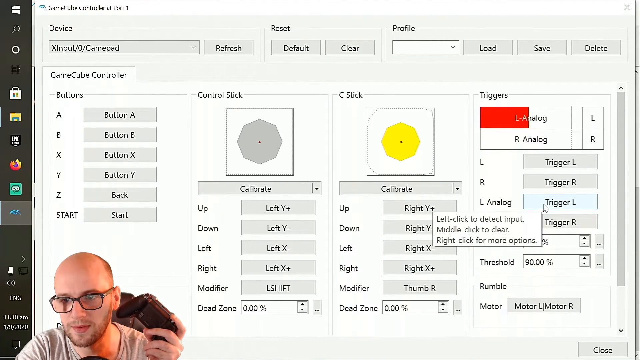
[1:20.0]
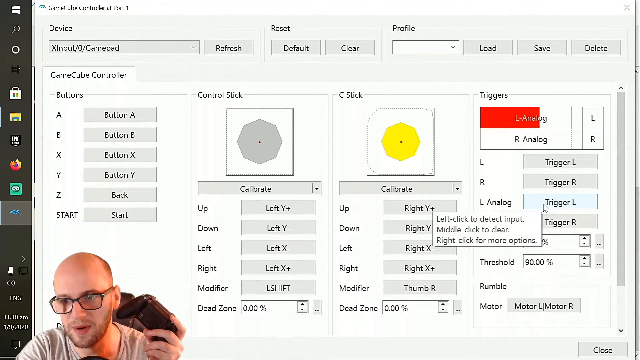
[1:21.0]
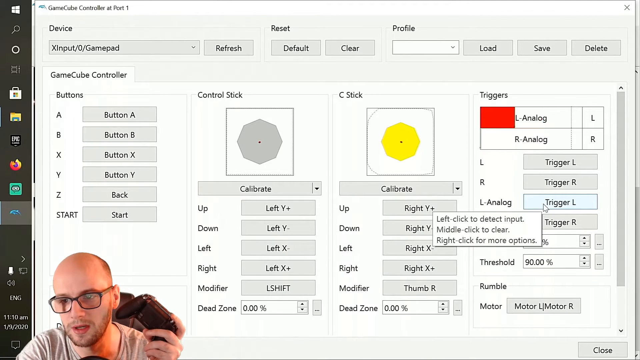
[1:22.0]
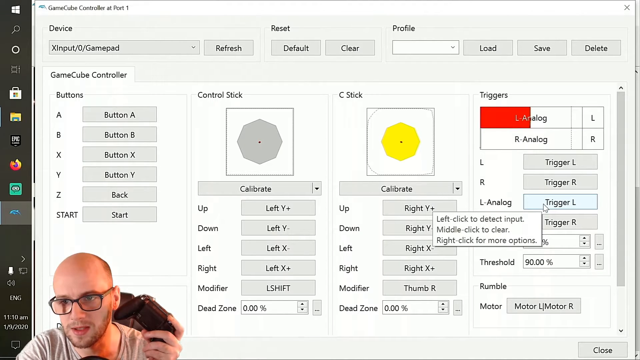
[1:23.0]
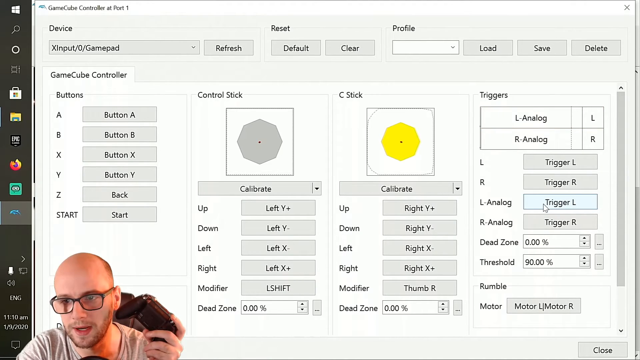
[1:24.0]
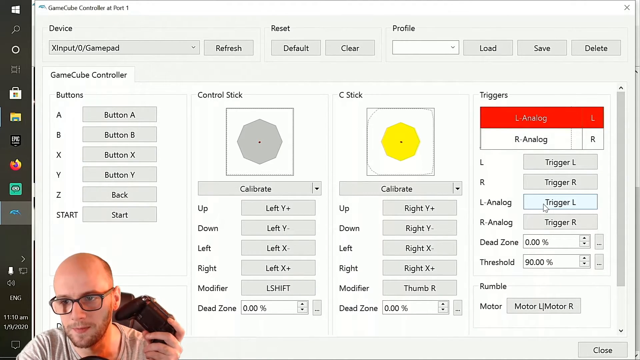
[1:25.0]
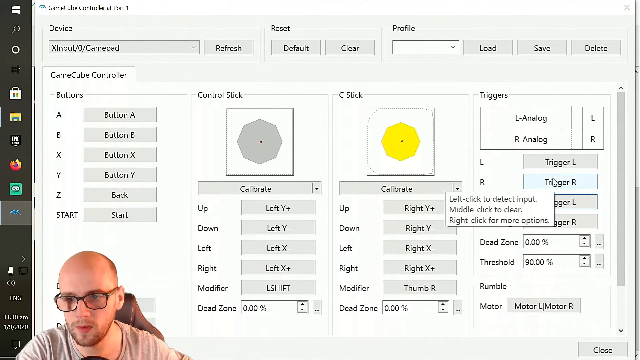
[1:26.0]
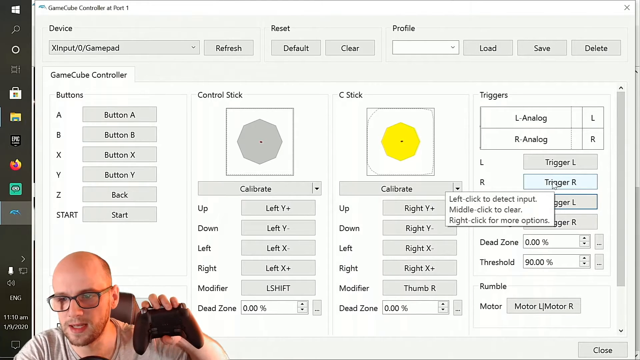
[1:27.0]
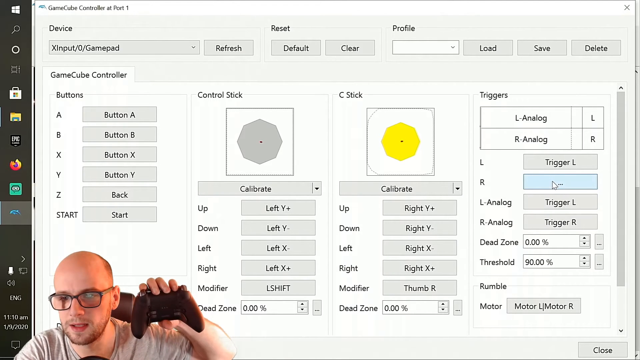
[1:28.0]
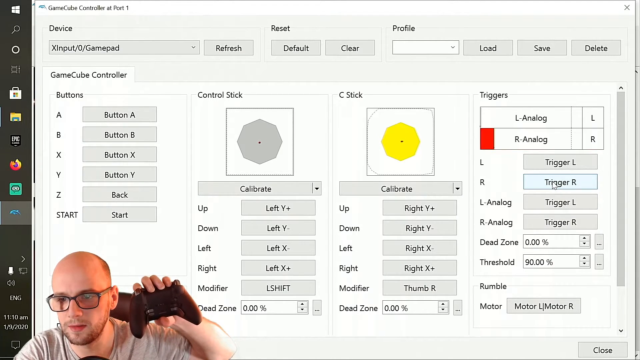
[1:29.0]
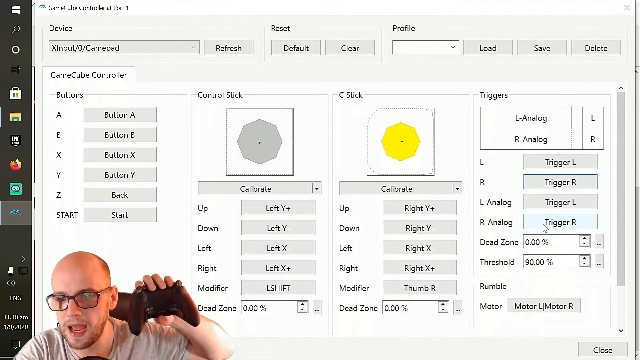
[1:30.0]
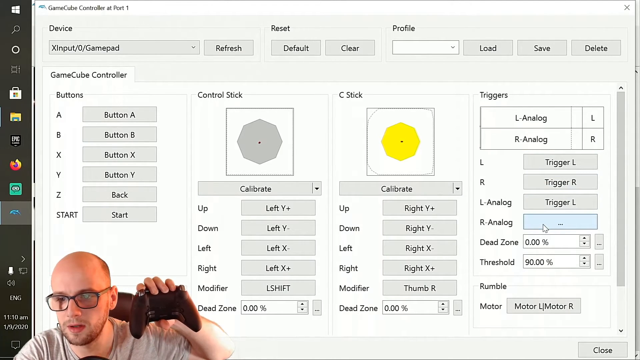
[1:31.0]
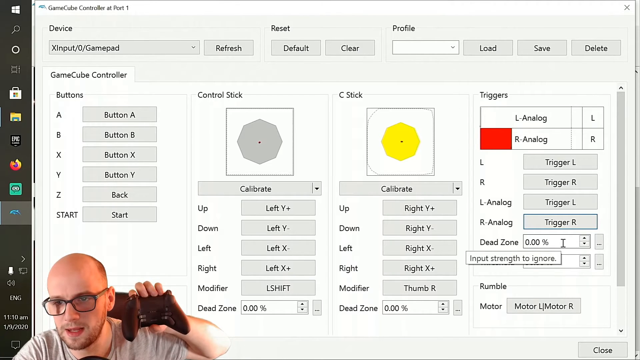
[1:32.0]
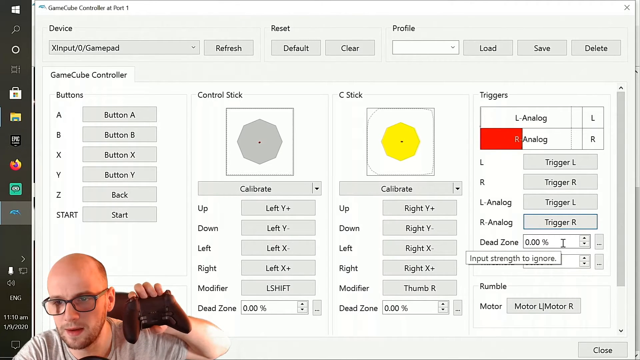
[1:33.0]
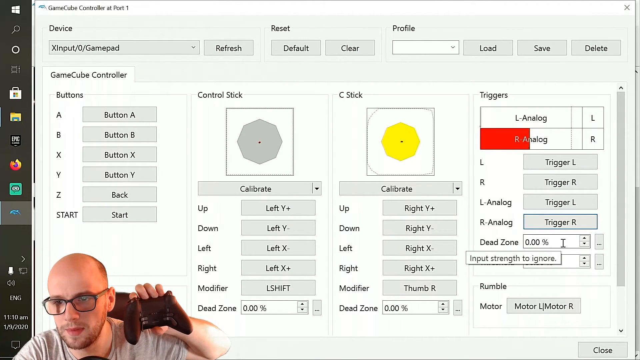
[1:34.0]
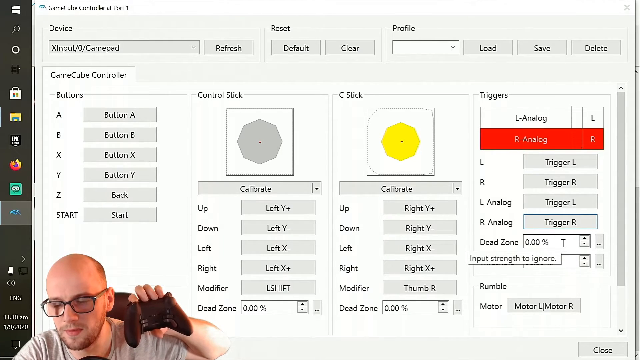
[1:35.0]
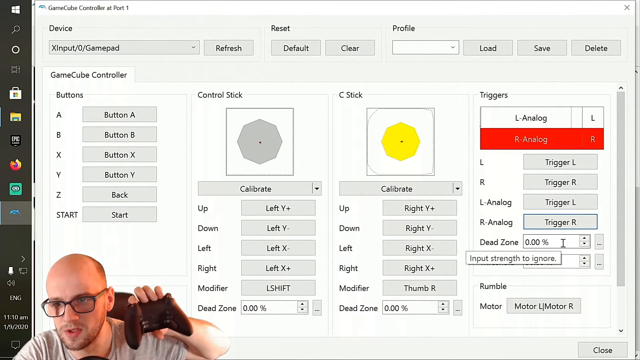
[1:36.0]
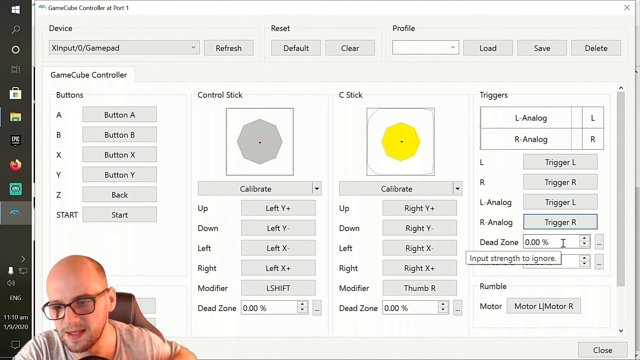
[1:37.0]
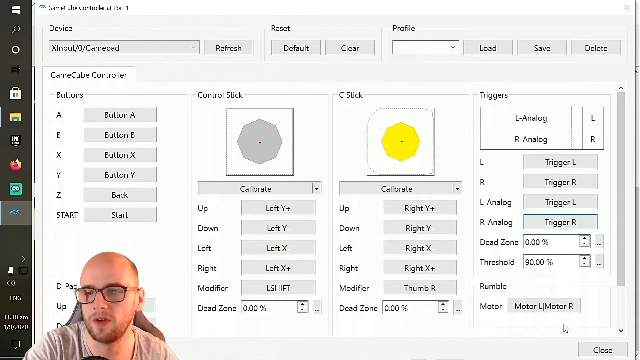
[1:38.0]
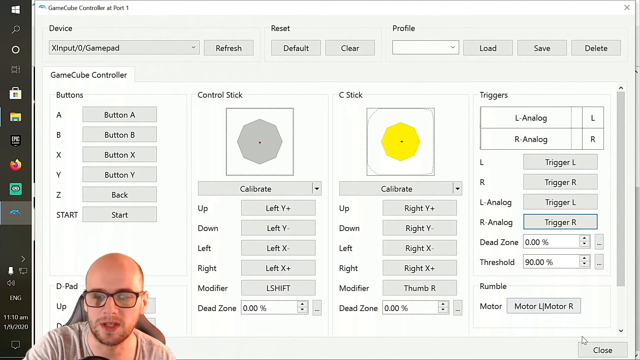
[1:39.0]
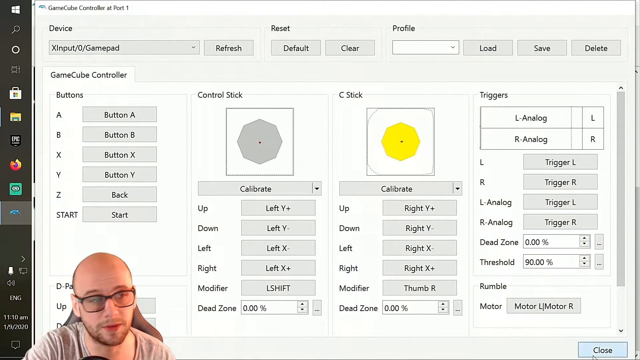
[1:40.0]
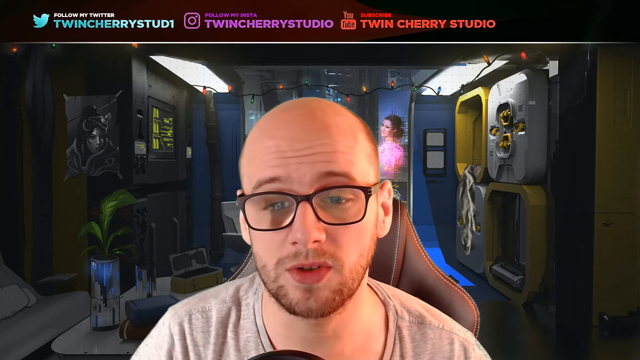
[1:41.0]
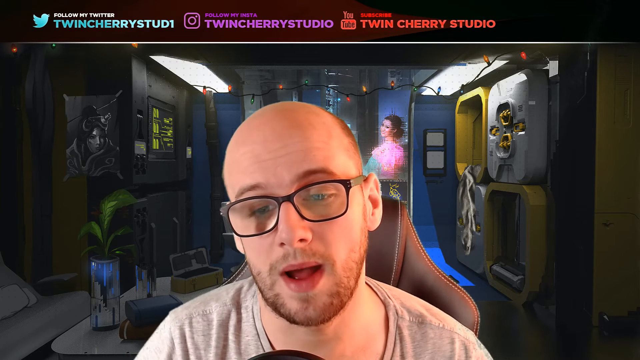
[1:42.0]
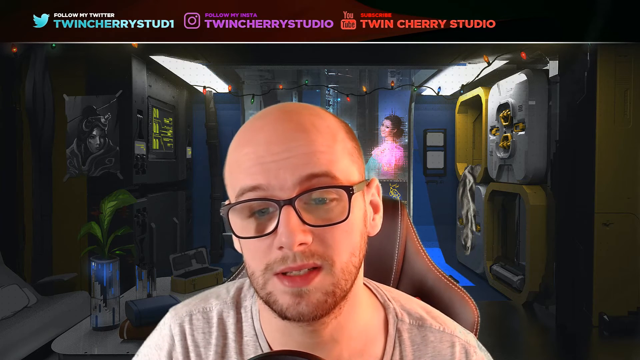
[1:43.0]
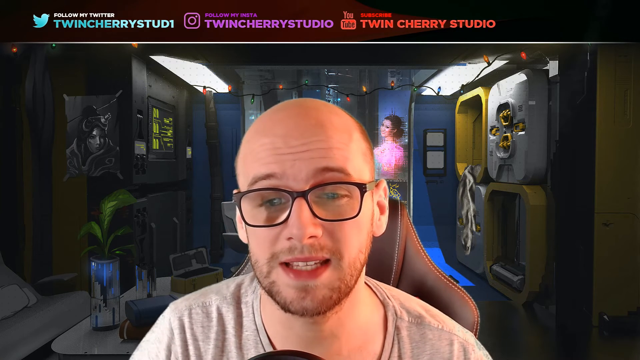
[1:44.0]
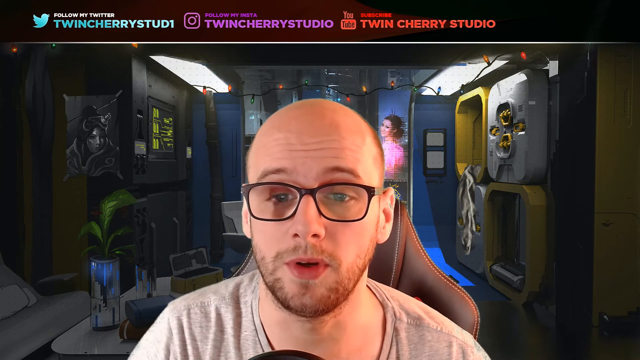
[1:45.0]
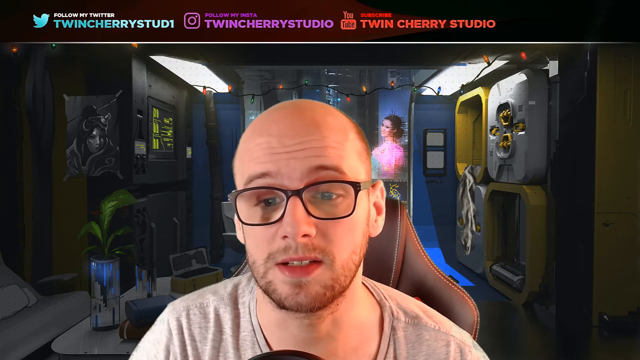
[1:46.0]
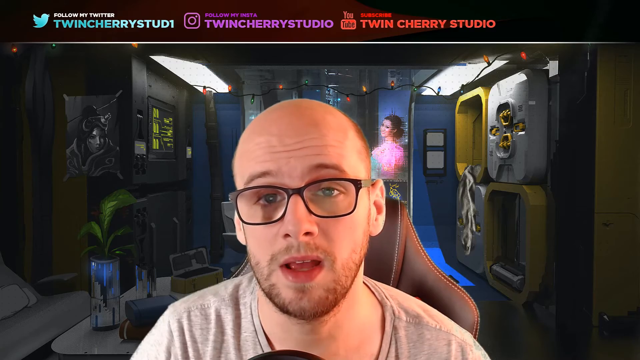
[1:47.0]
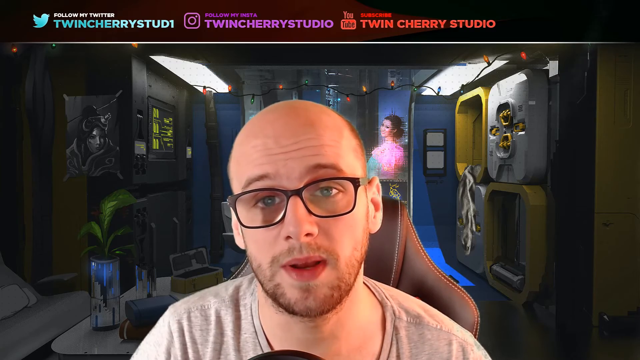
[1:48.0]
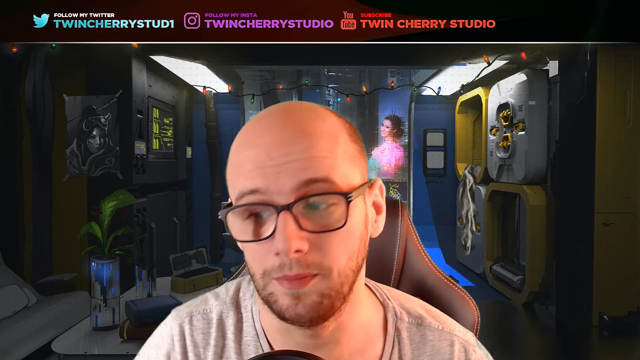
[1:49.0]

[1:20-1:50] The bald Caucasian man in black-rimmed glasses appears in the lower left-hand corner, holding his black Xbox controller up to the camera. He pushes different buttons on it, lighting up areas on the screen where it says "R analog" and other areas. He then clicks the close button with his cursor, and the view returns to full screen with his head filling the whole picture. The background is dark, with the video game up behind him. On this main screen his blue eyes are visible. "gaming news" and "games" appear, coming at the viewer like an ad.